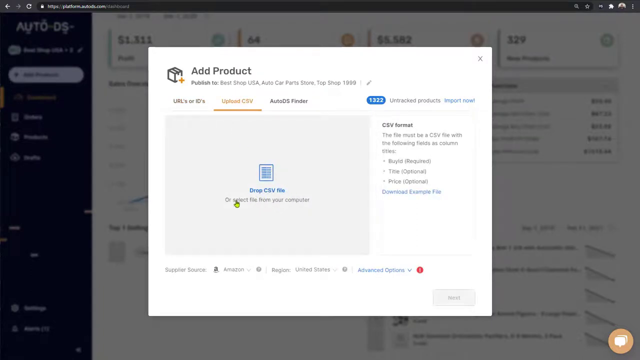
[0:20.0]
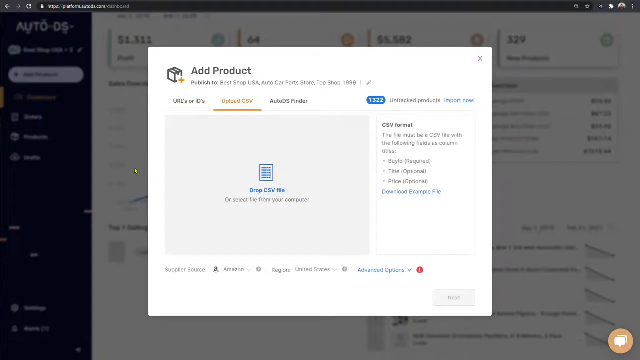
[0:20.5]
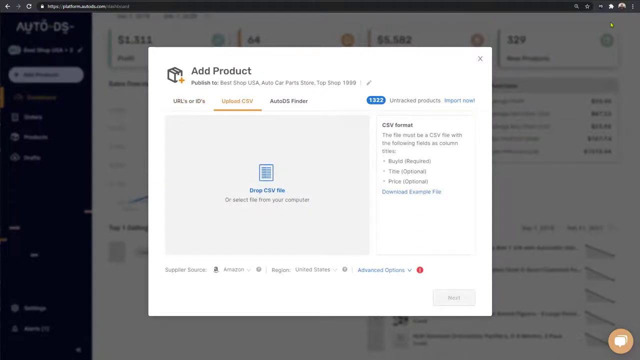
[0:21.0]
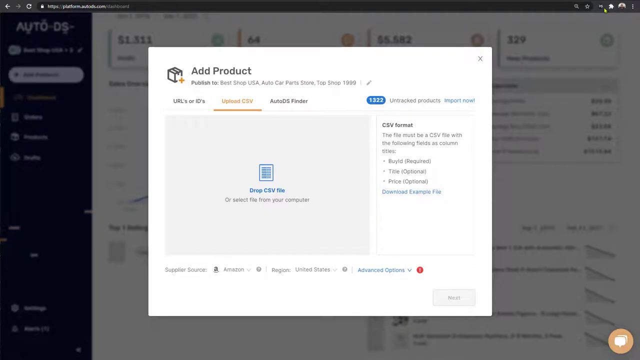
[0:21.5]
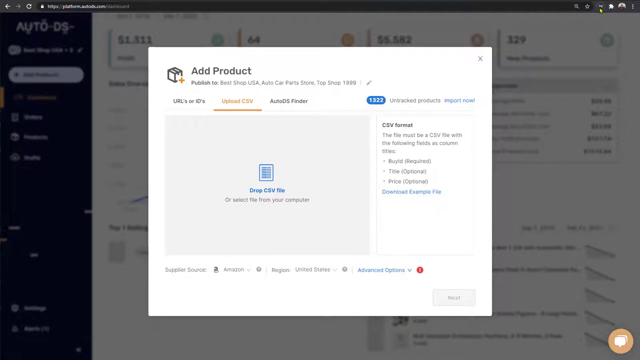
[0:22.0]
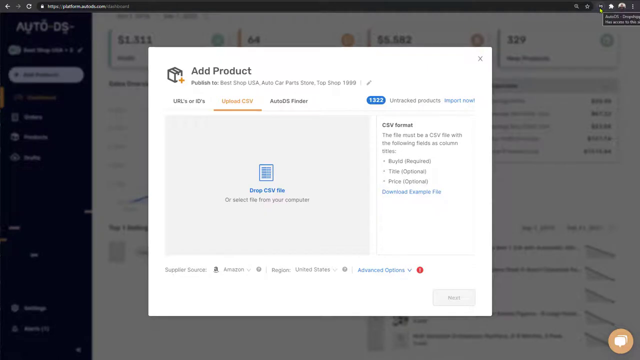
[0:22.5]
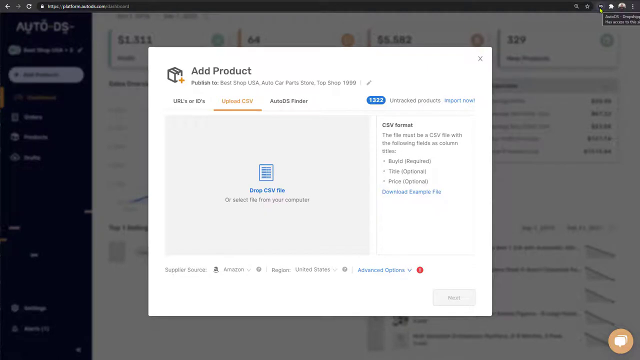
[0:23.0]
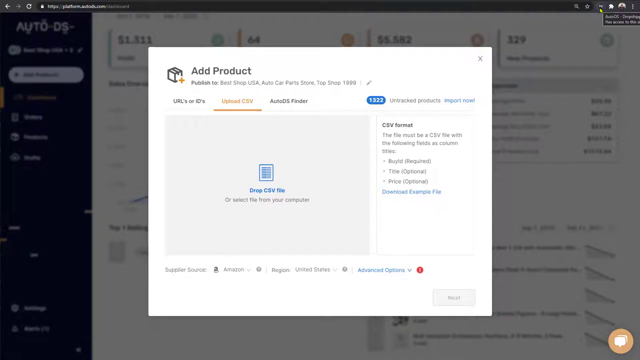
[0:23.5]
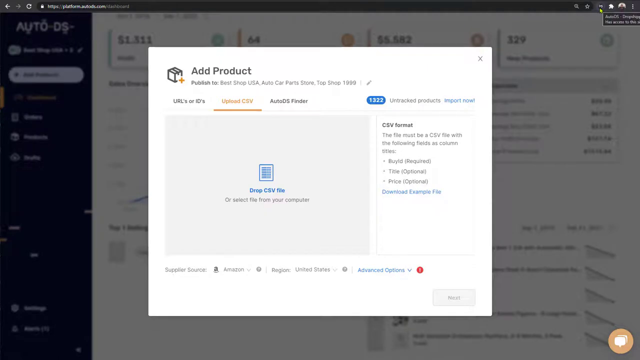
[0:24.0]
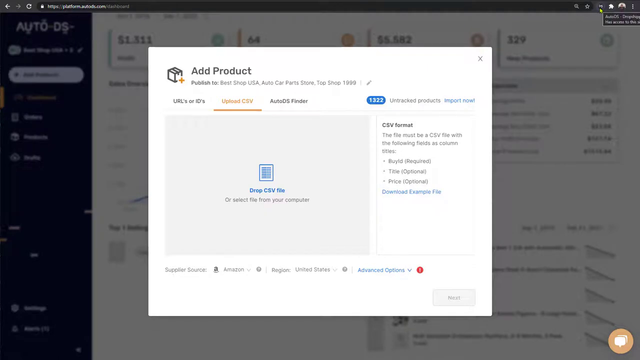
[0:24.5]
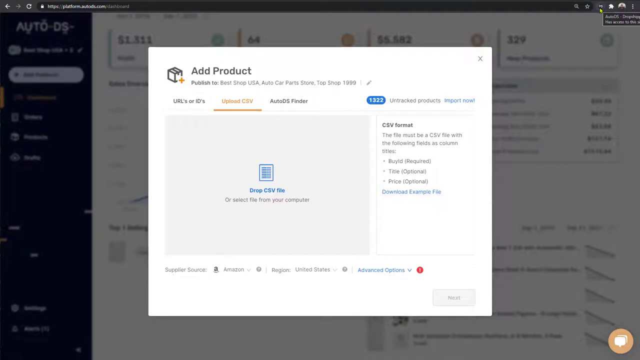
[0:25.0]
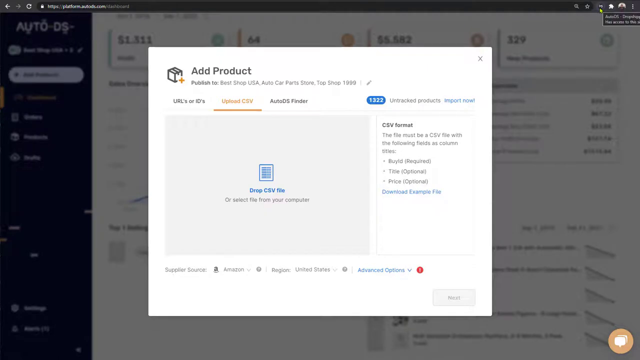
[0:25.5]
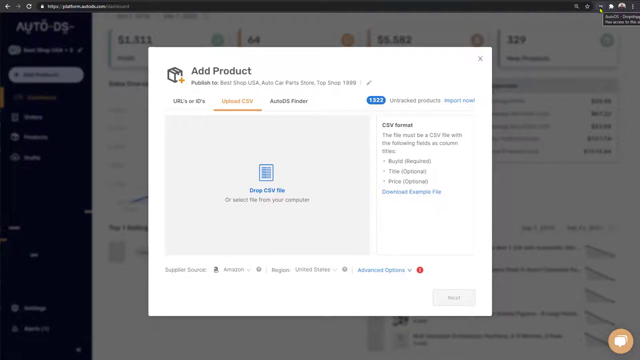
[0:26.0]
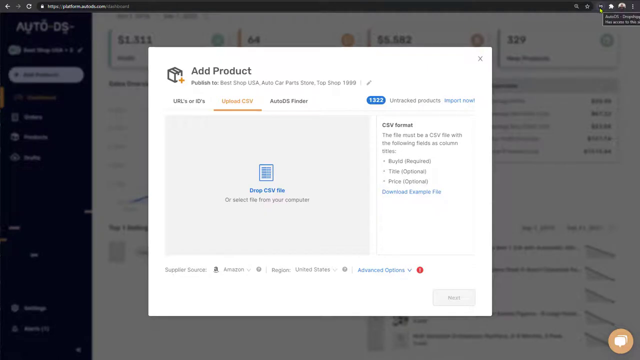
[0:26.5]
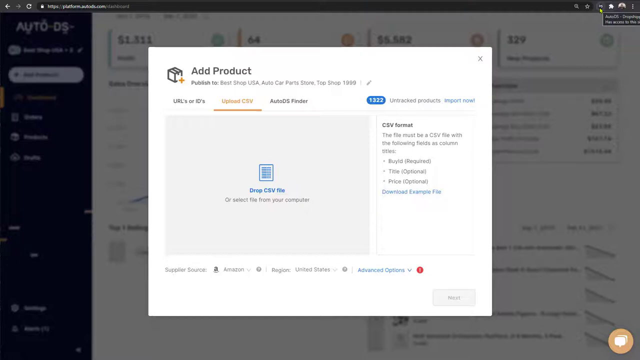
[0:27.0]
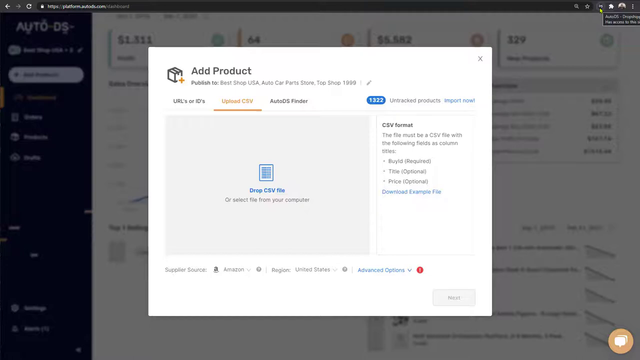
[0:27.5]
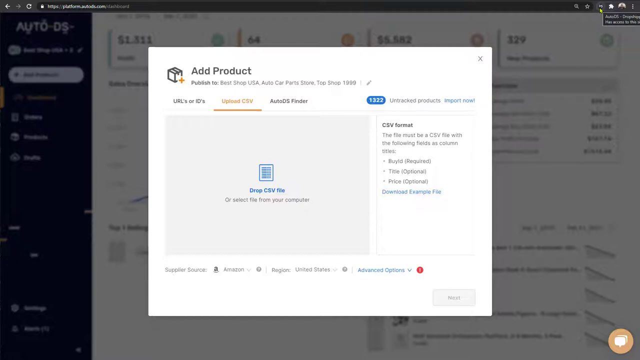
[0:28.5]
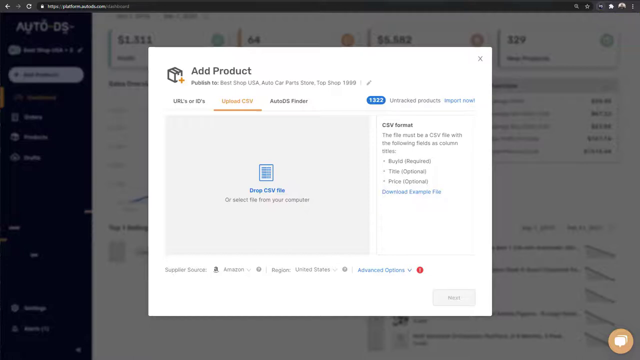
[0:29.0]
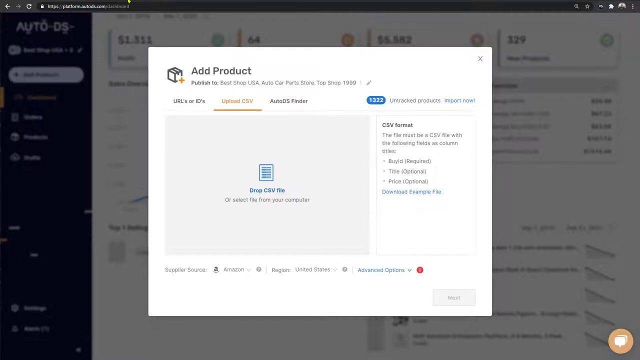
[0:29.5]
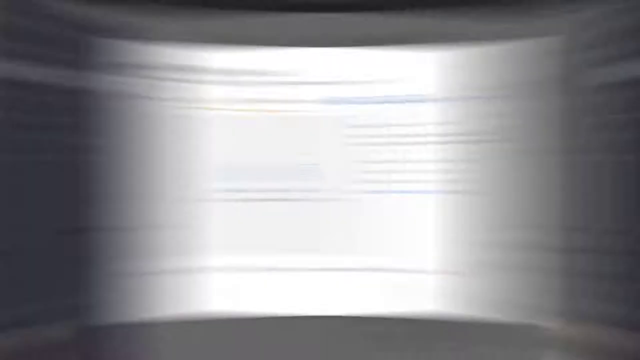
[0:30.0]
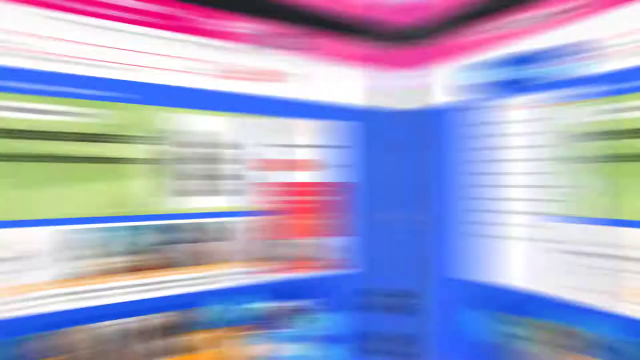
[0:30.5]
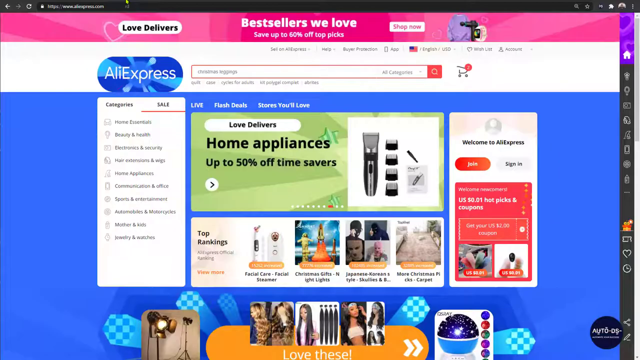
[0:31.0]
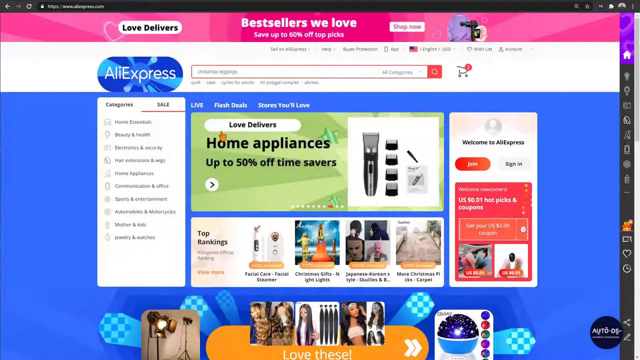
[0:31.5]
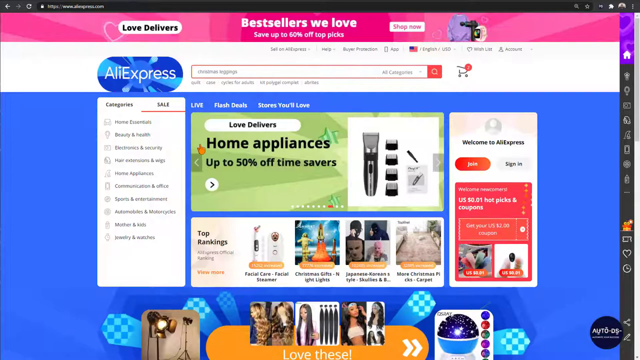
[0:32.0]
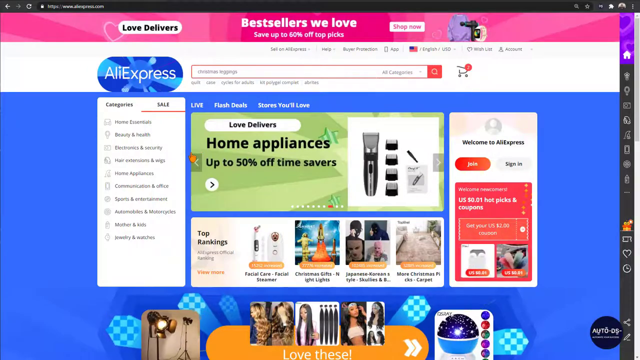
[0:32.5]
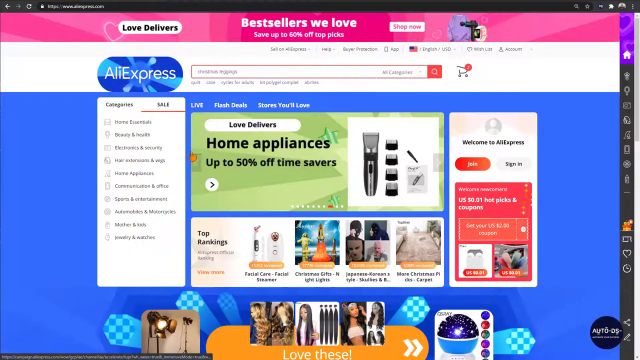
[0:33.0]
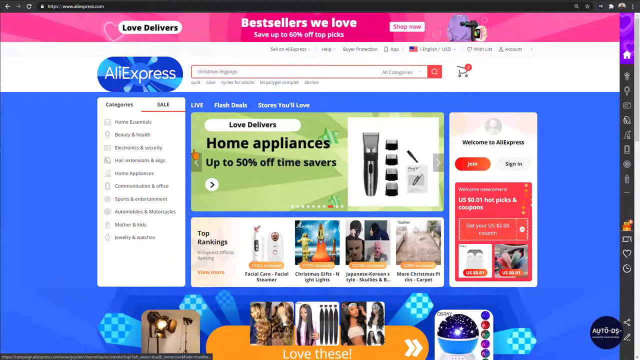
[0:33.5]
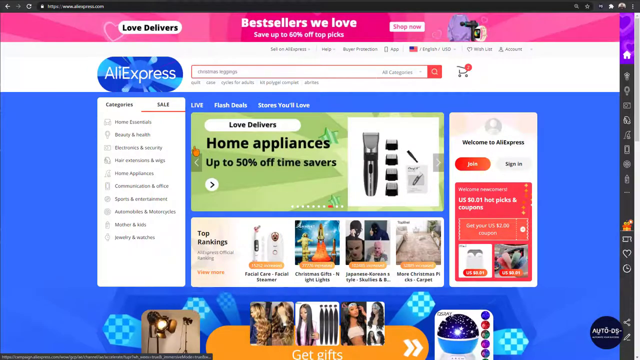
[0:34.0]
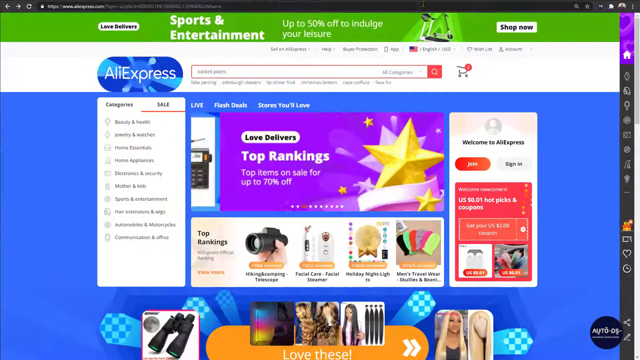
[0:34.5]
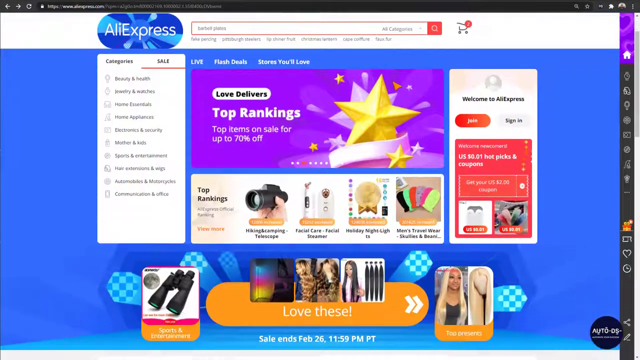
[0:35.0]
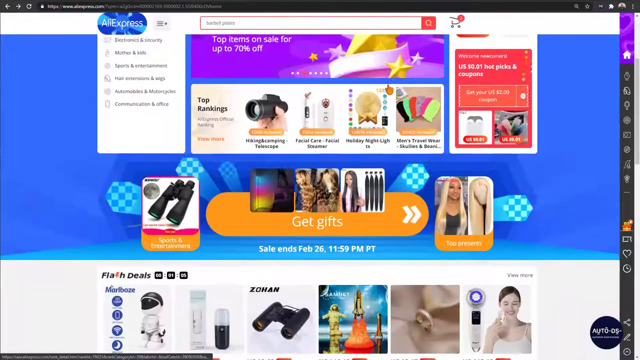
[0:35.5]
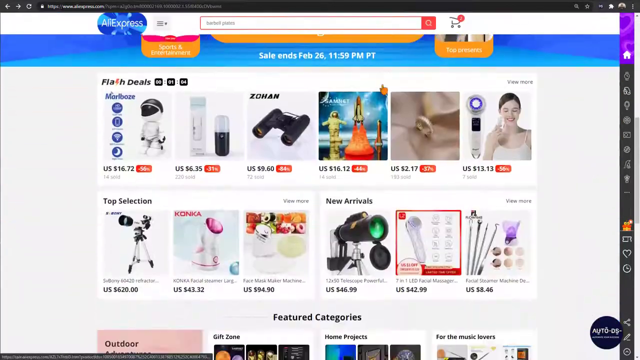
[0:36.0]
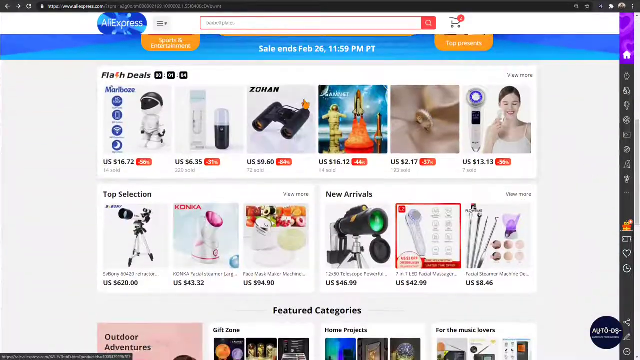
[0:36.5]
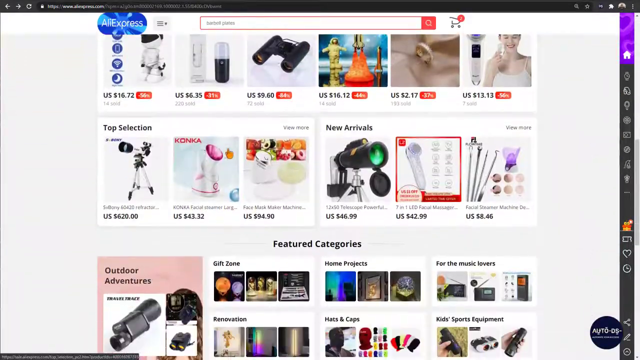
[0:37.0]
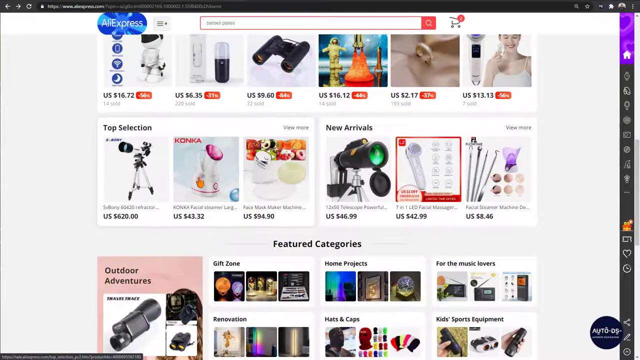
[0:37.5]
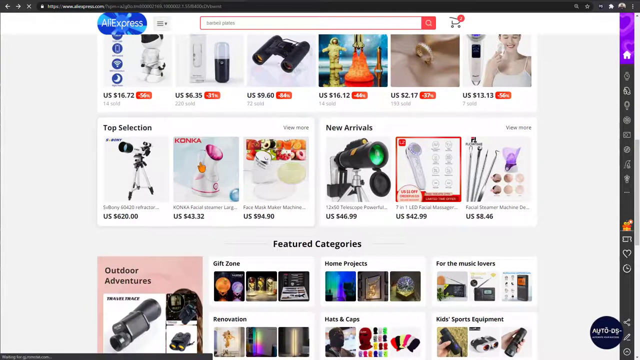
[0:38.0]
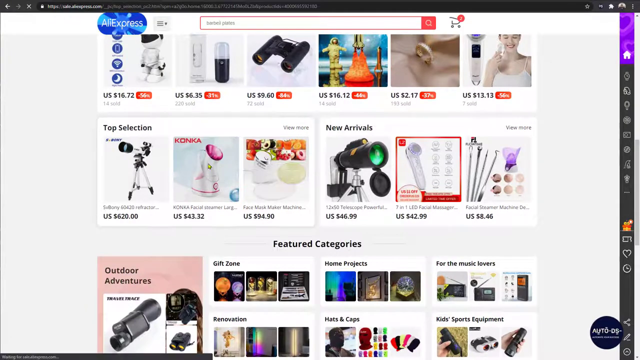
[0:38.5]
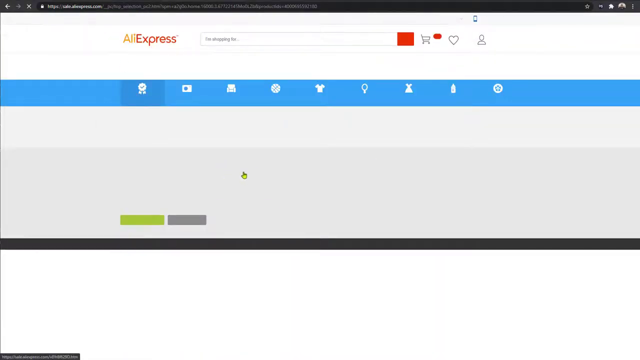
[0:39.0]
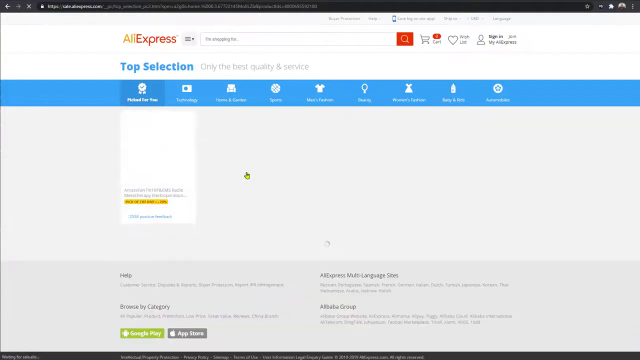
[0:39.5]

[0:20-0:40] The person is in the add a product section, where text reads "publish to best shop USA auto car parts store top shop," along with some numbers, one of which is a 19; the others are unclear. The person then goes to a tab labeled "upload CSV," with a CSV format shown on the right side. The view switches back to the main AliExpress website, where the person appears to hover over a section in the middle with black text reading "home appliances up to 50% off time savers" and "love deliverers." The person scrolls down a little and appears to click on a facial appliance.